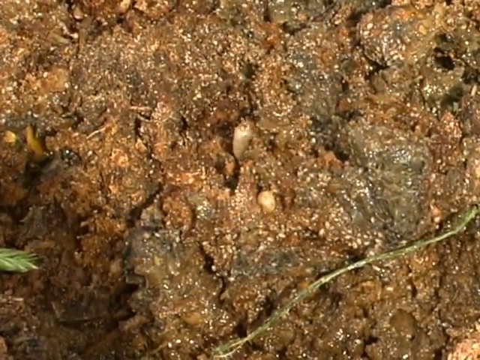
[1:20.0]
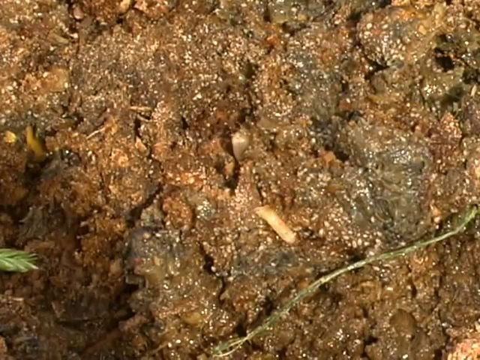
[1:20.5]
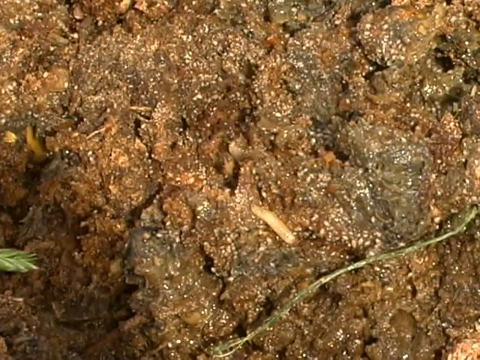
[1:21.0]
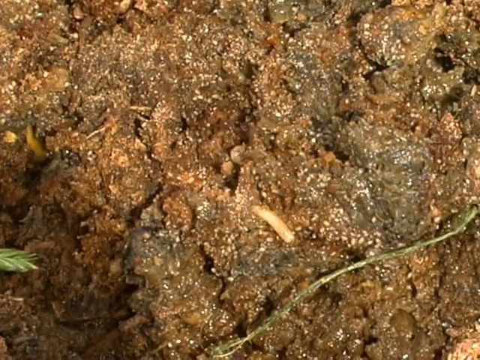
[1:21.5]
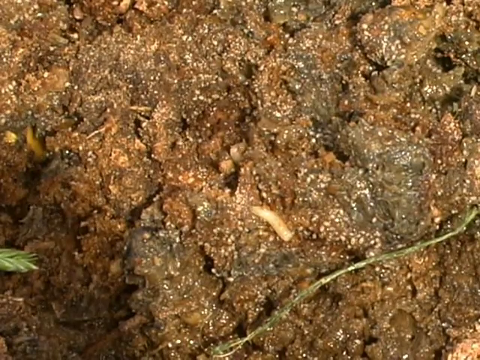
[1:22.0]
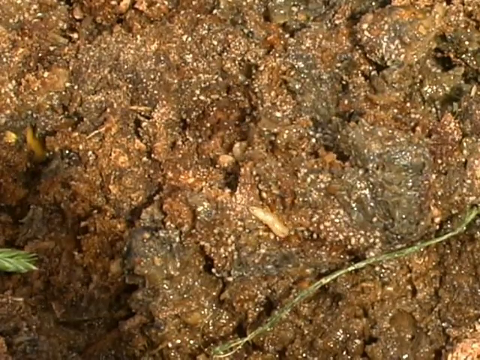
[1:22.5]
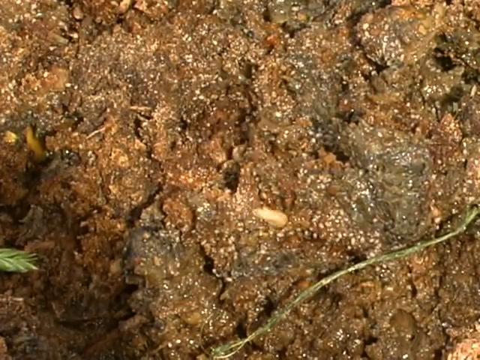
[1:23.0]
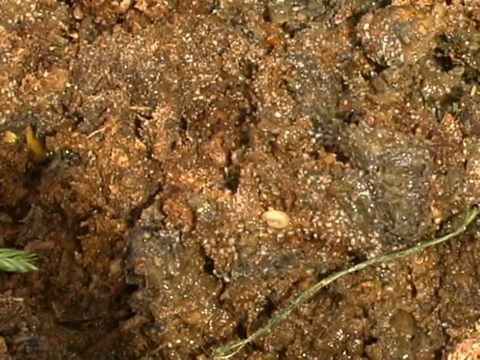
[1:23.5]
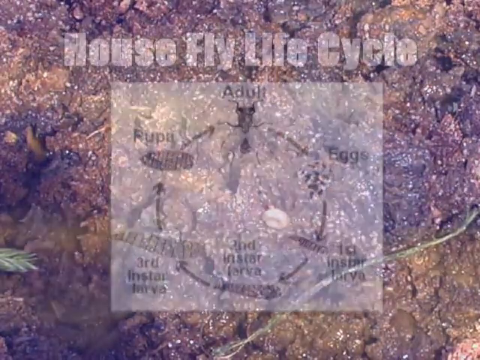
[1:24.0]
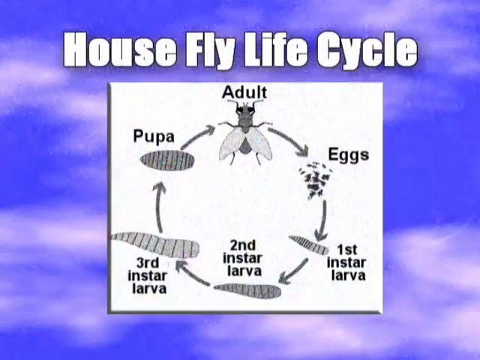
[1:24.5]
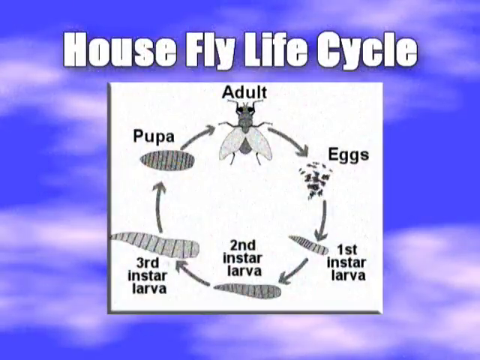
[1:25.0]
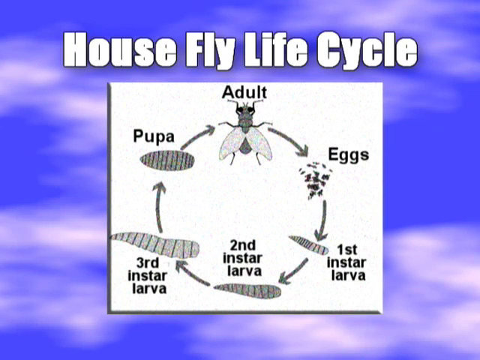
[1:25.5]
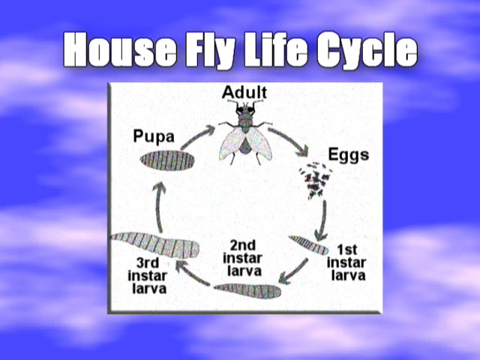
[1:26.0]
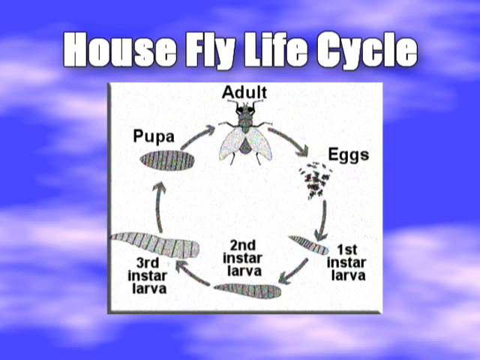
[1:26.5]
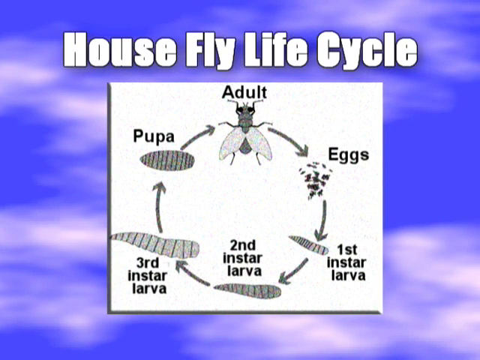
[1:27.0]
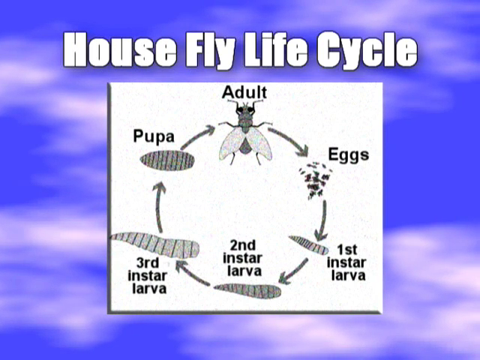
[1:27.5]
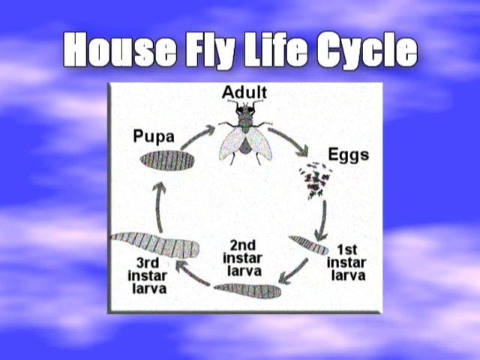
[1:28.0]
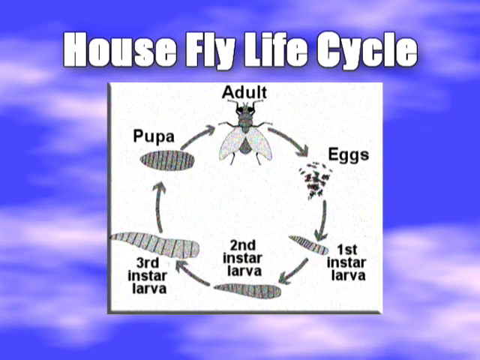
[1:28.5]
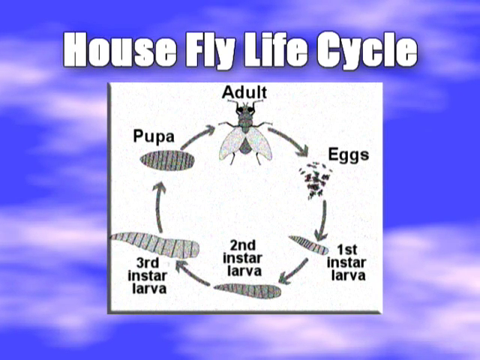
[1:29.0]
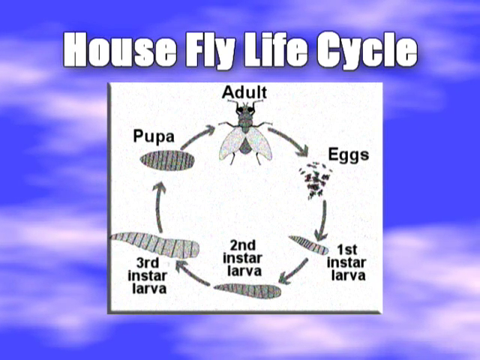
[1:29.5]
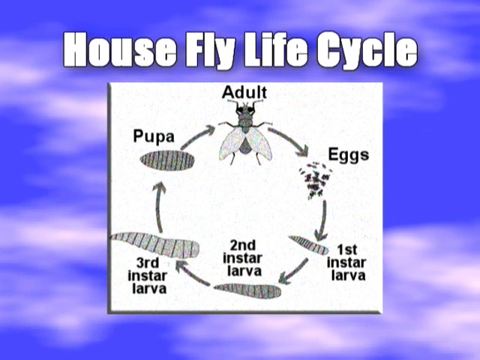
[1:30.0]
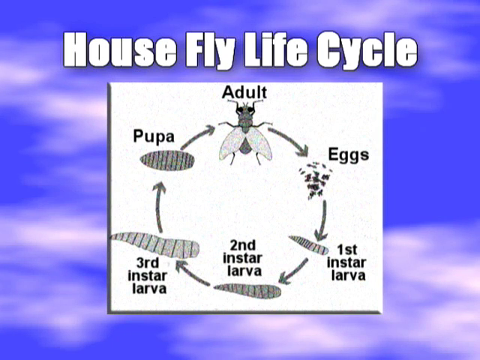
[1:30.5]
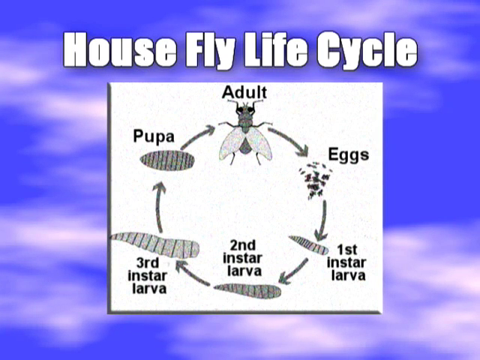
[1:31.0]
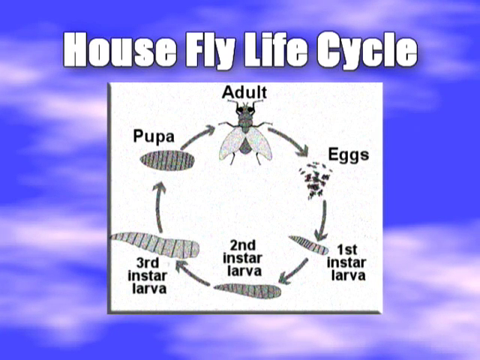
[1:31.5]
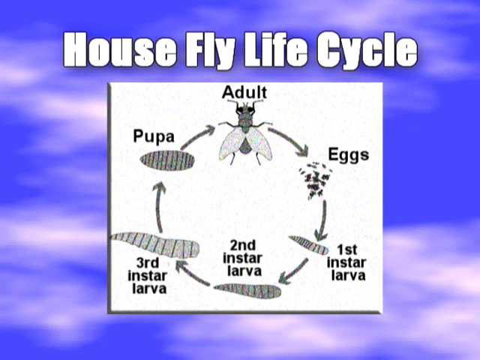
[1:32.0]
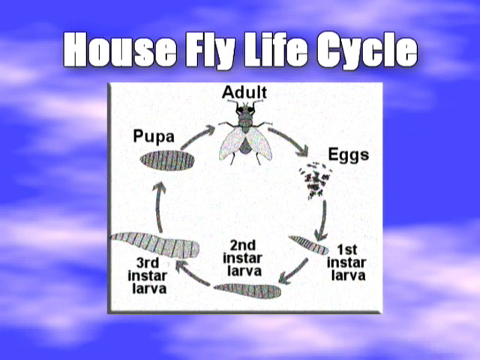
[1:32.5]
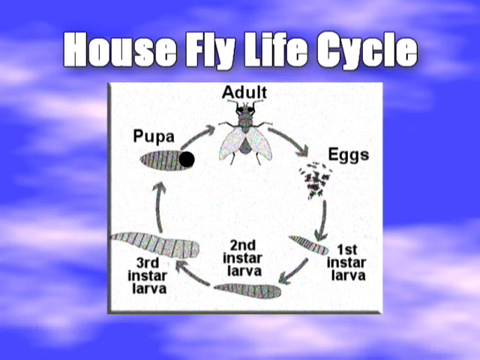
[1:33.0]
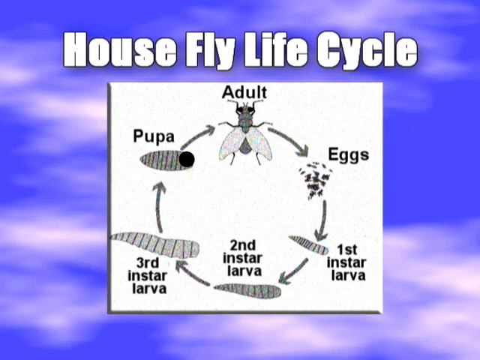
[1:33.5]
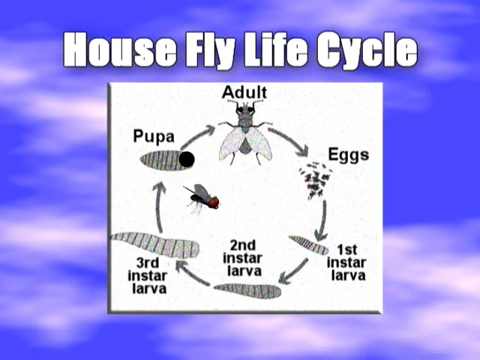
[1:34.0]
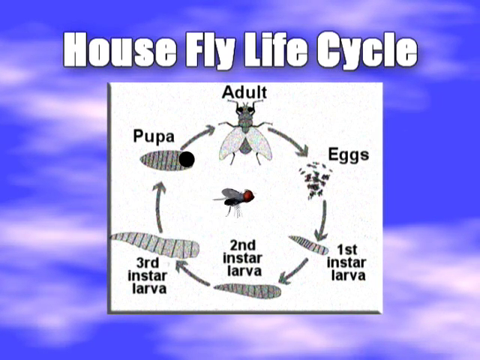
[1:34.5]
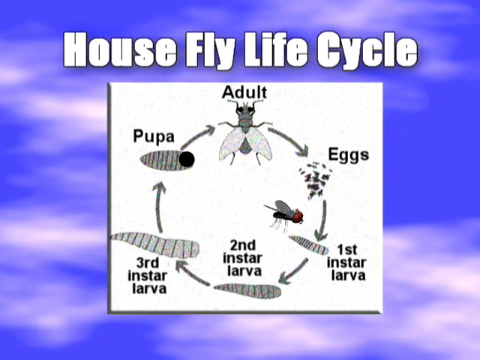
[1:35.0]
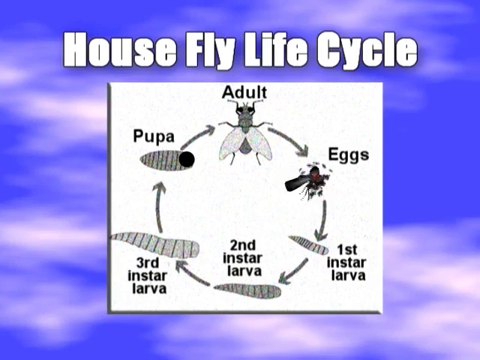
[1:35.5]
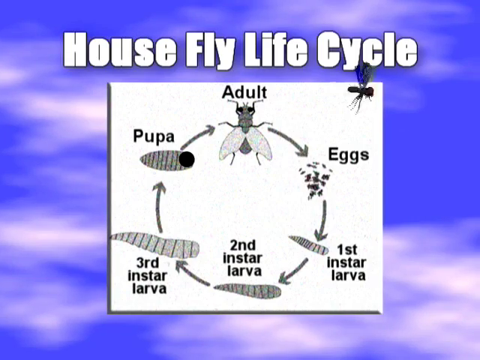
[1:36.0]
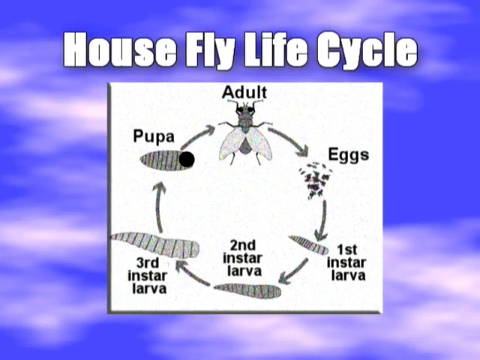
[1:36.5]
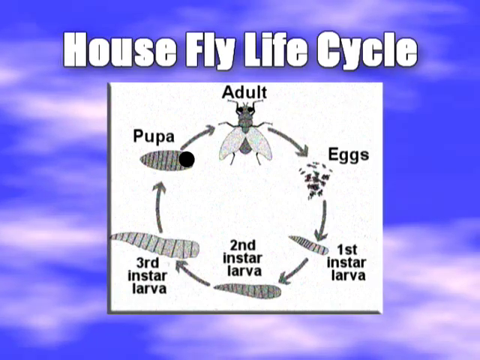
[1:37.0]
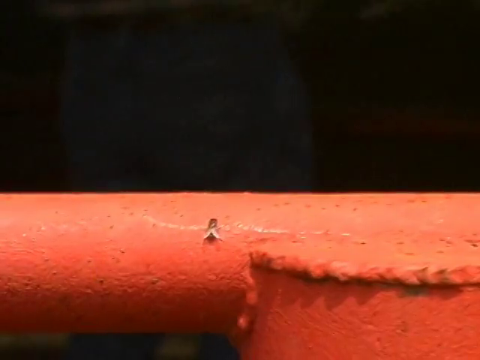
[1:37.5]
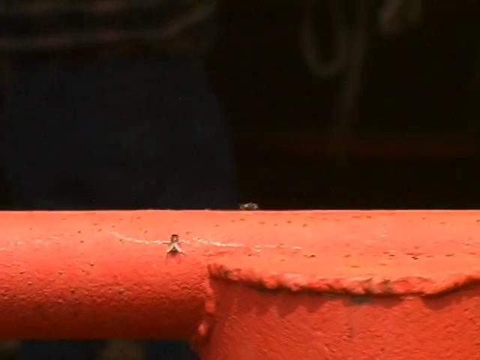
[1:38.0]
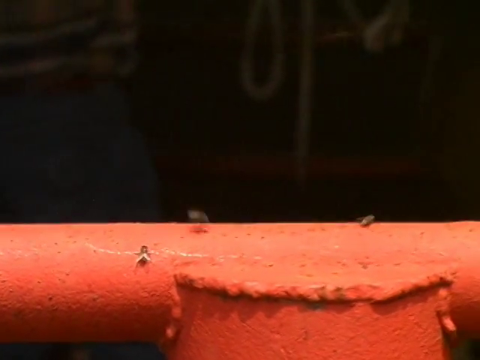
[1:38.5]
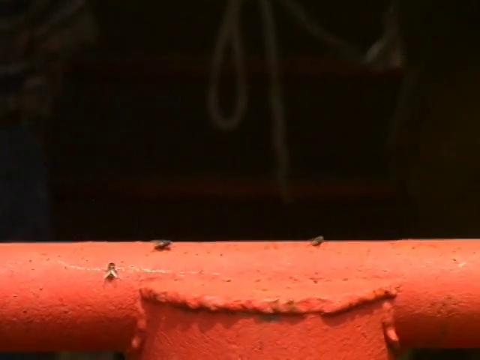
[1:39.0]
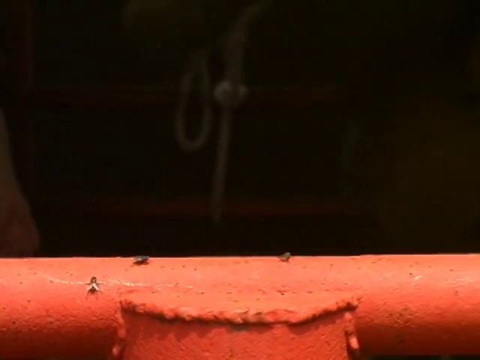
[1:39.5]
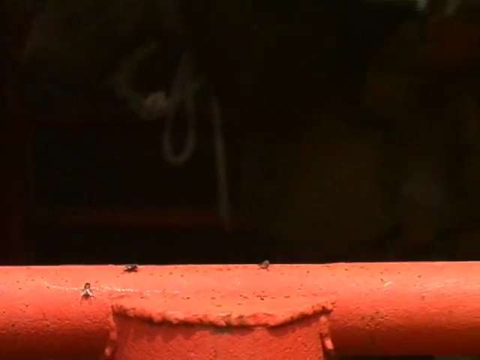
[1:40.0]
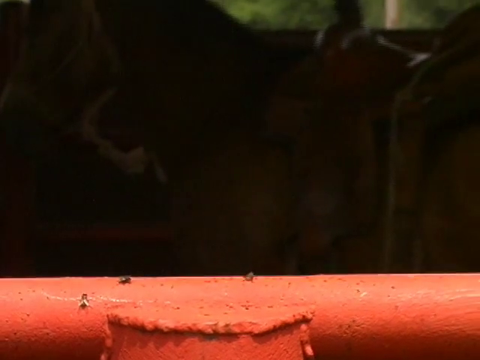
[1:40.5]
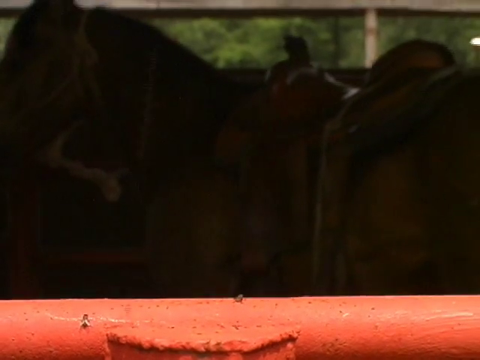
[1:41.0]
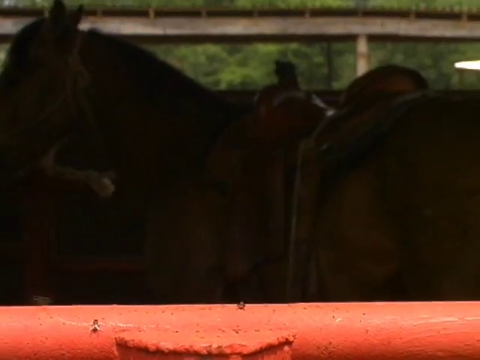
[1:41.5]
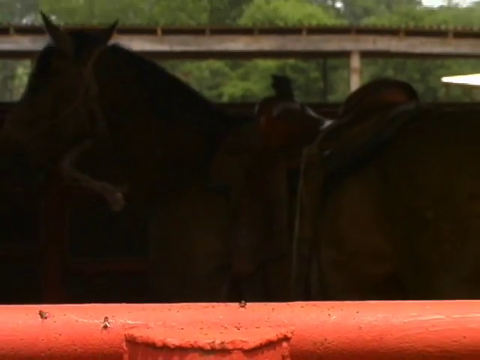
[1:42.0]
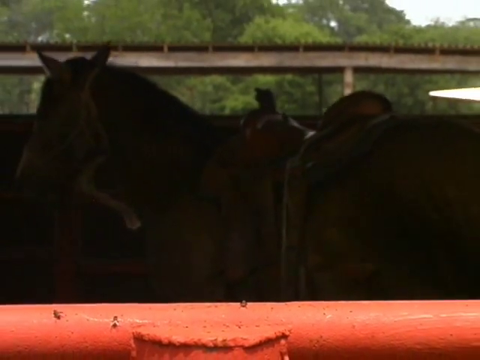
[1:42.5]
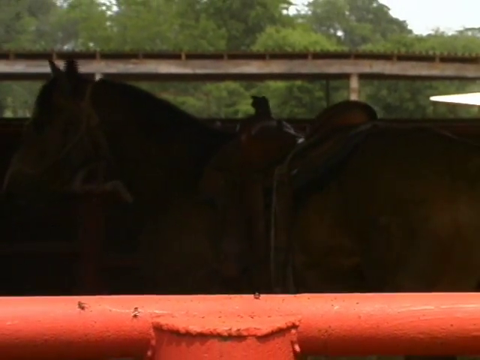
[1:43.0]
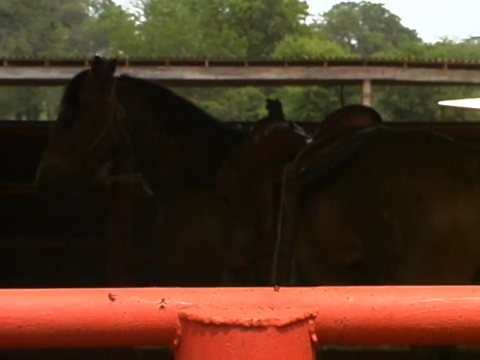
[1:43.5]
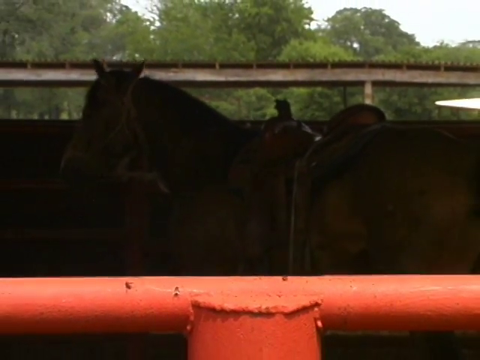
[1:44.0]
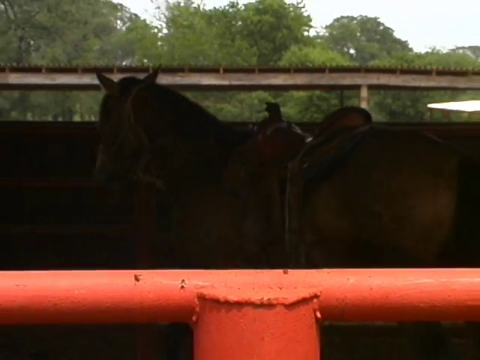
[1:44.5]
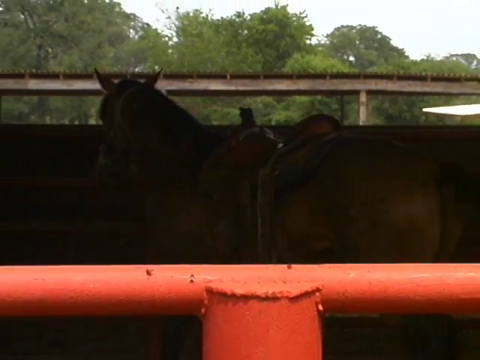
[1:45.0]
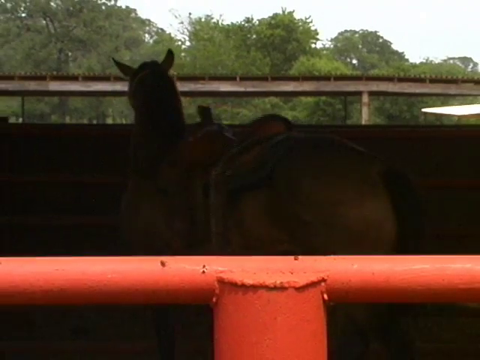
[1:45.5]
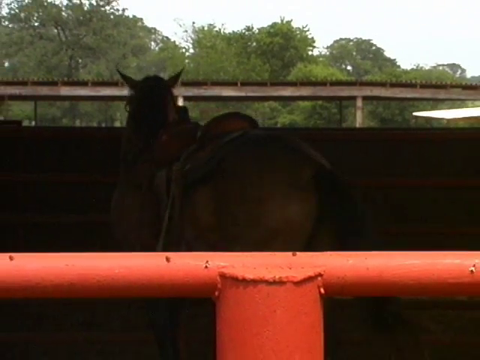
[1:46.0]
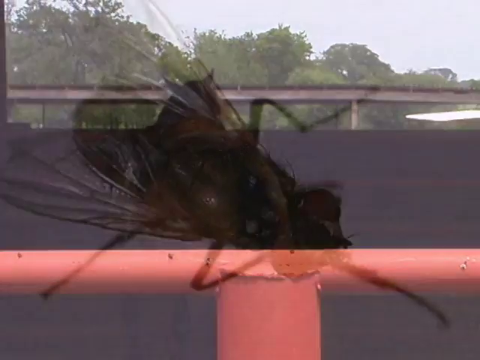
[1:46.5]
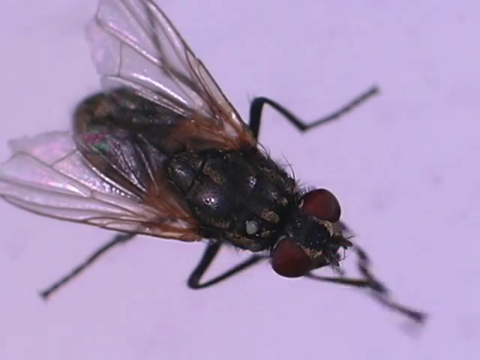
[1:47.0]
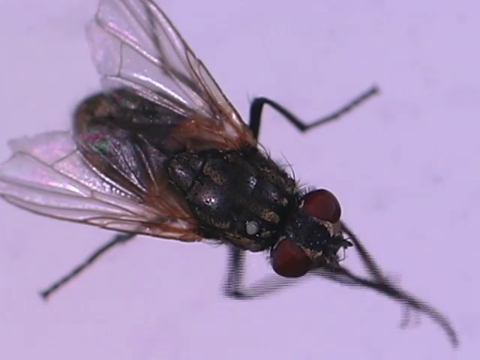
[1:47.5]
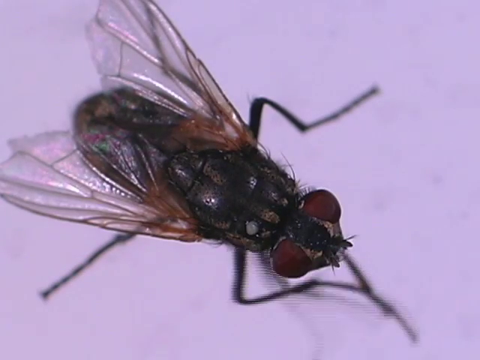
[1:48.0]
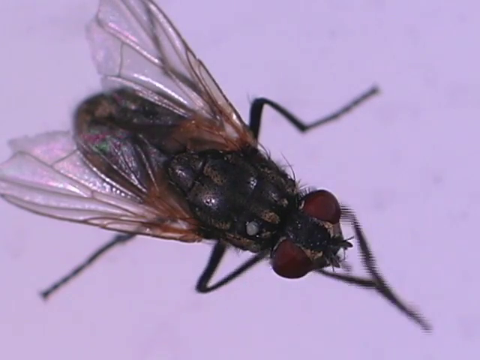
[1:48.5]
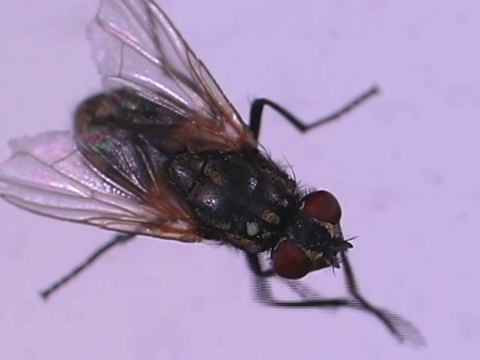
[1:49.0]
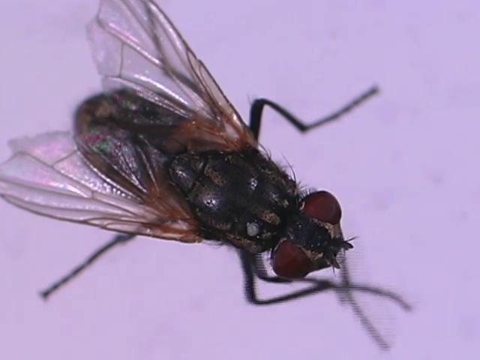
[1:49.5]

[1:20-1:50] A close-up shows what looks like white maggots burrowing into a clump of dirt. After a few seconds a chart appears, headed "House Fly Life Cycle." It shows a circle with the stages of a fly's development around it: eggs, first instar larva, second instar larva, third instar larva, pupa, and an adult fly at the top of the cycle, with curved arrows connecting each step. The background behind the chart looks like a bright blue sky with white clouds. At one point an illustrated, animated fly flies across the graph. The video then switches to a close-up of what looks like the top of a gate on a farm, with flies landing on it and flying away; in the background are a horse and a pen. Next is an overhead close-up of a fly rubbing its front legs together.